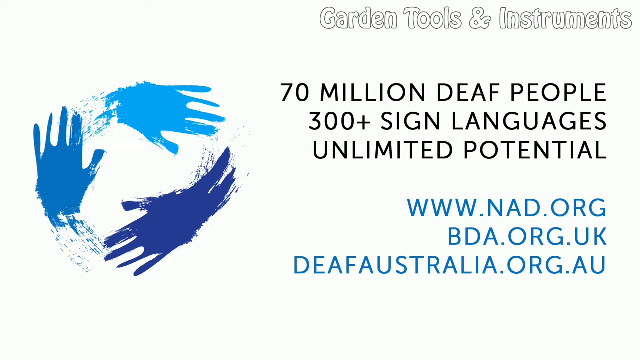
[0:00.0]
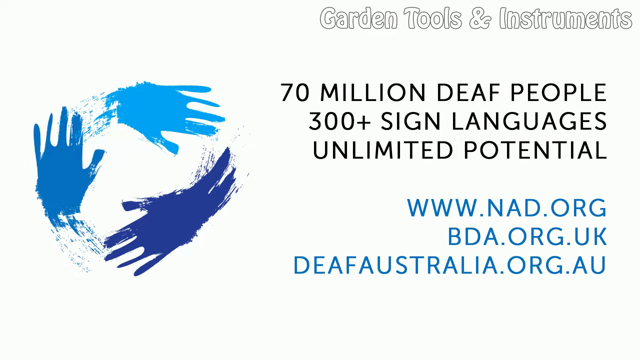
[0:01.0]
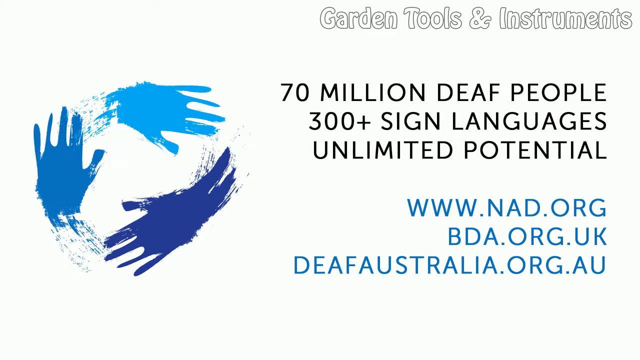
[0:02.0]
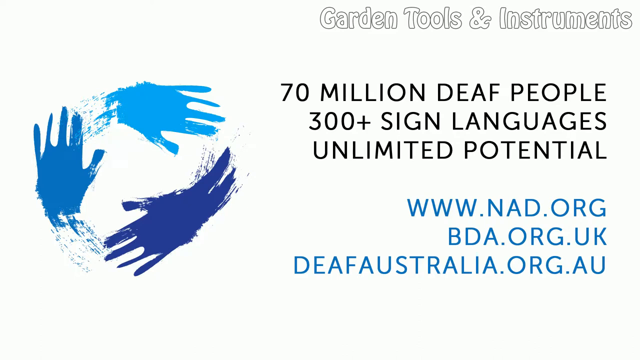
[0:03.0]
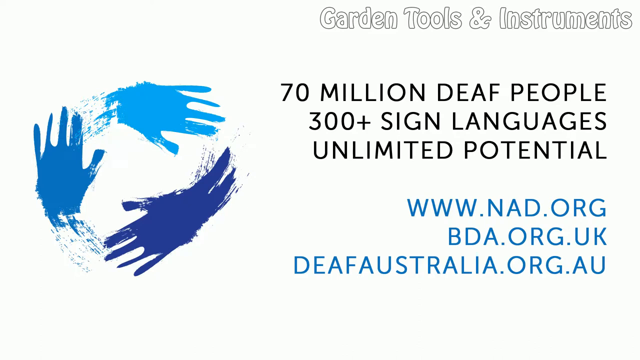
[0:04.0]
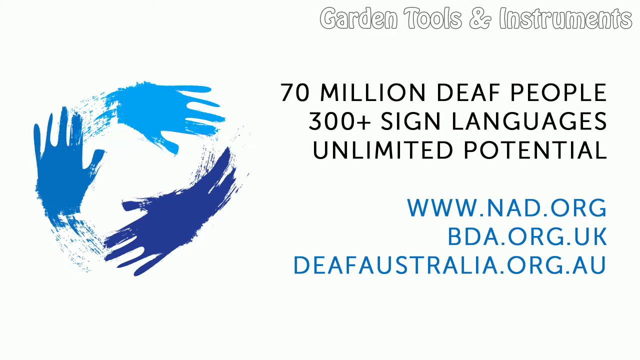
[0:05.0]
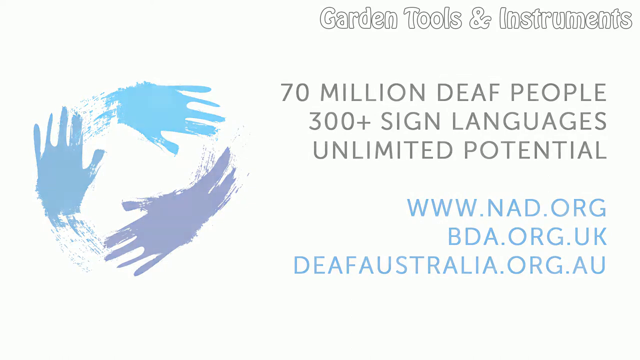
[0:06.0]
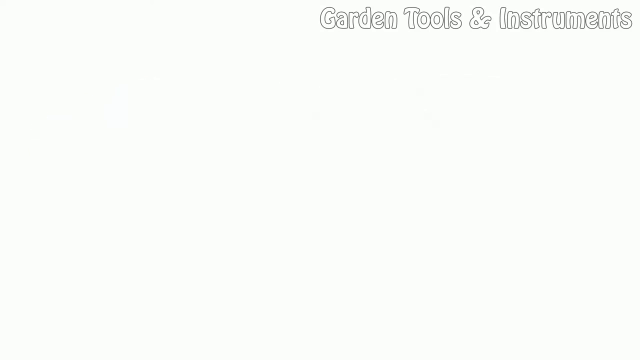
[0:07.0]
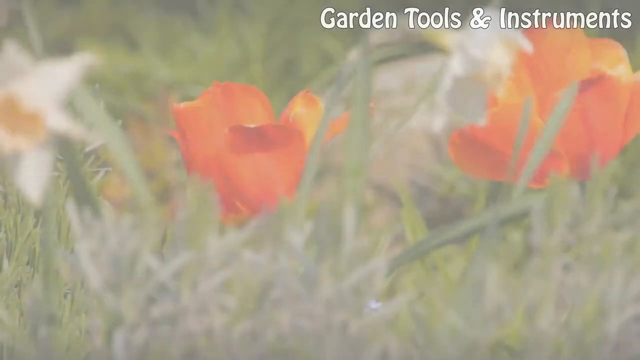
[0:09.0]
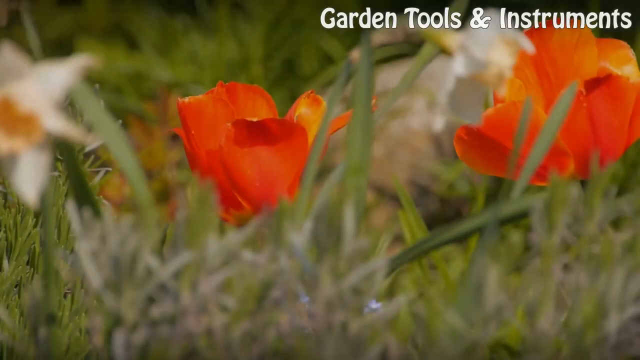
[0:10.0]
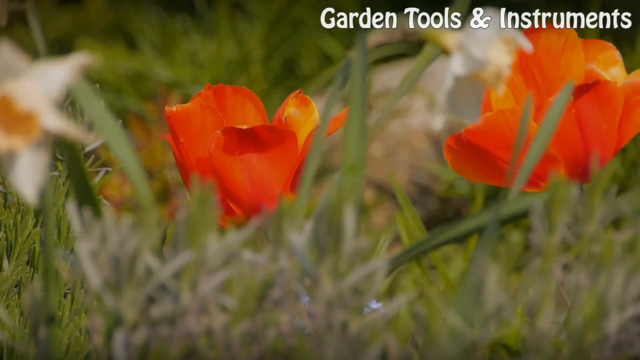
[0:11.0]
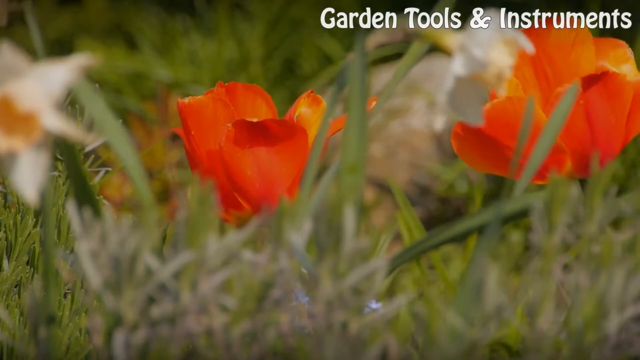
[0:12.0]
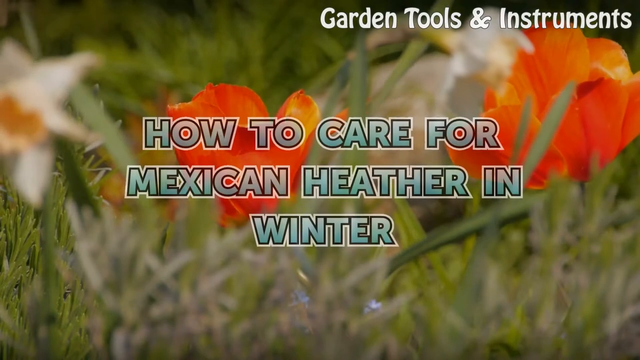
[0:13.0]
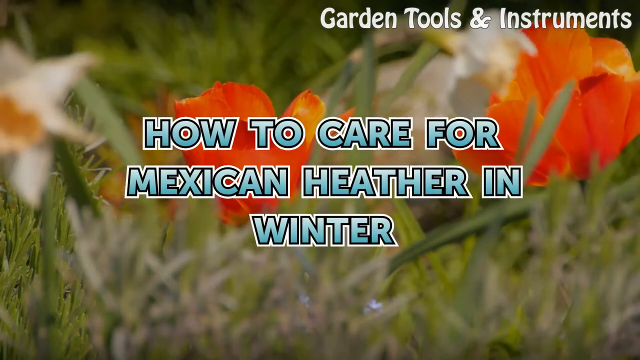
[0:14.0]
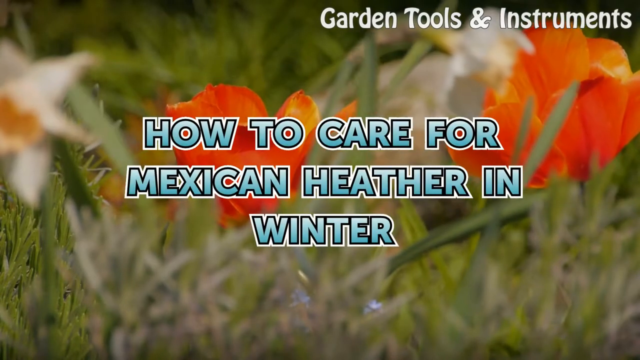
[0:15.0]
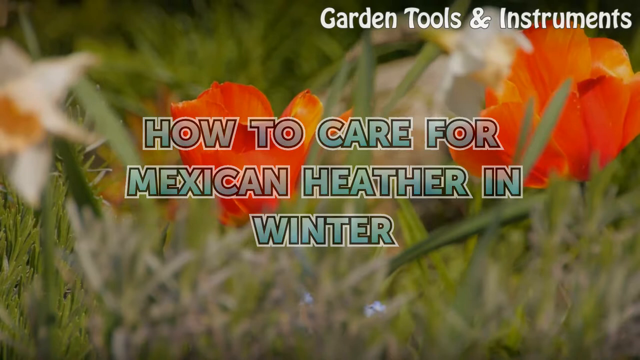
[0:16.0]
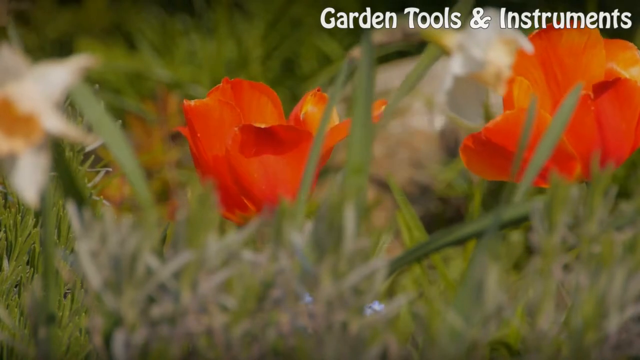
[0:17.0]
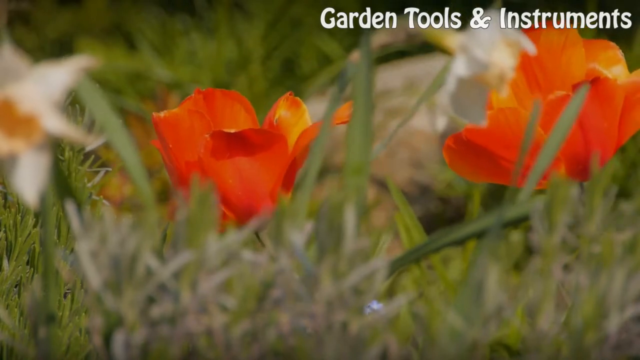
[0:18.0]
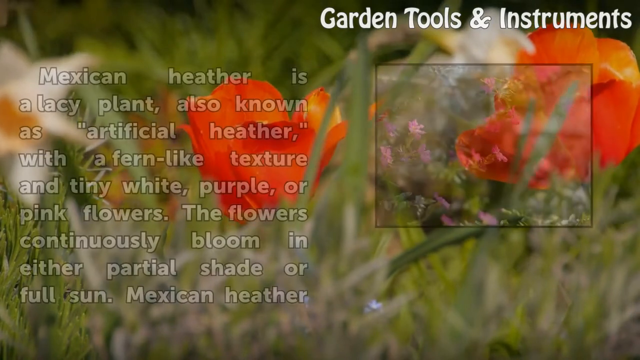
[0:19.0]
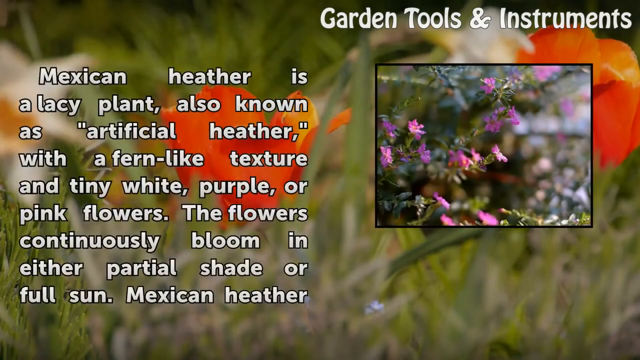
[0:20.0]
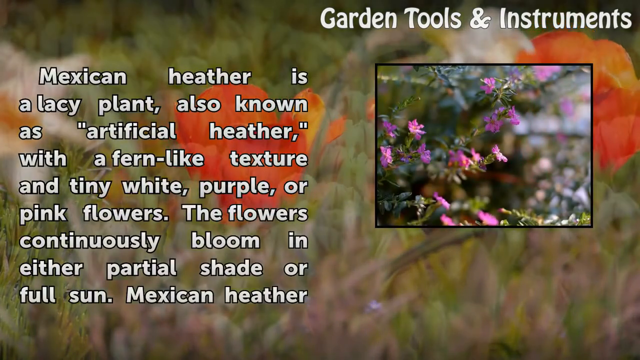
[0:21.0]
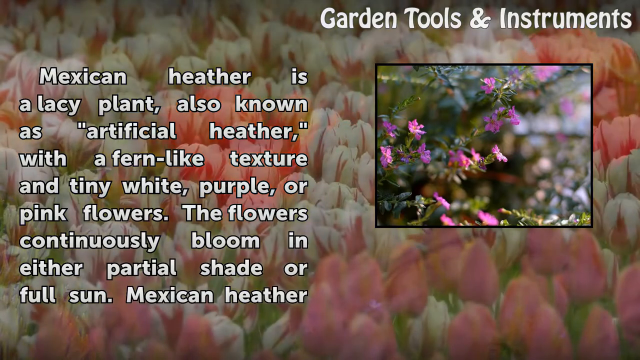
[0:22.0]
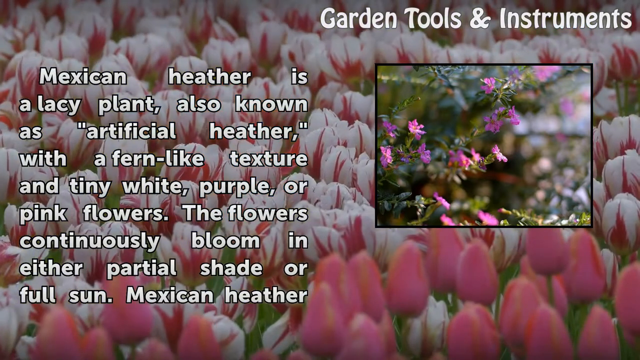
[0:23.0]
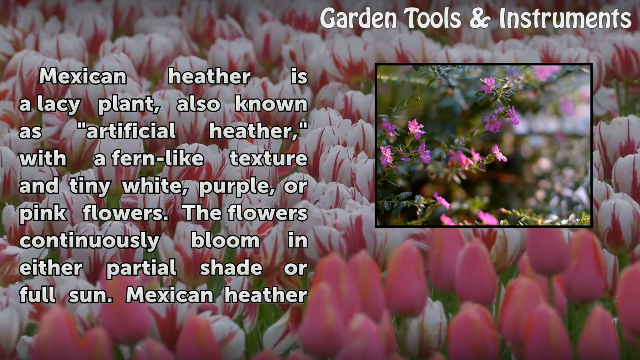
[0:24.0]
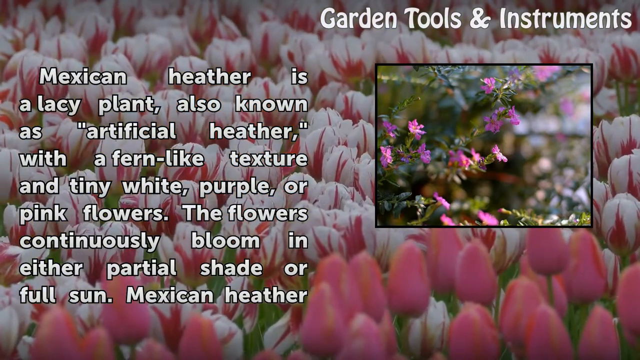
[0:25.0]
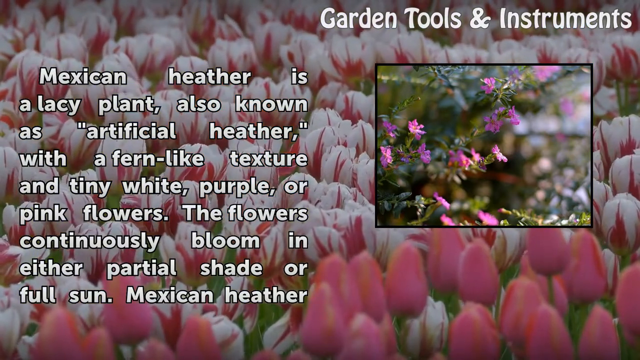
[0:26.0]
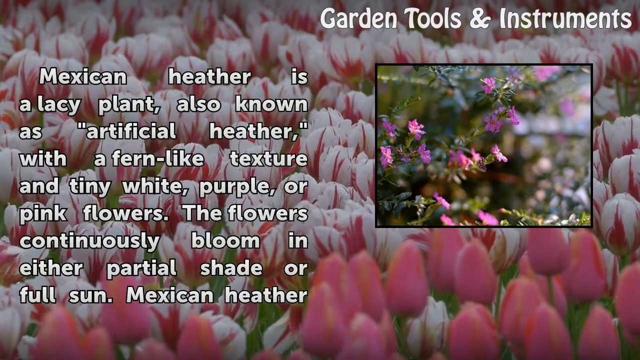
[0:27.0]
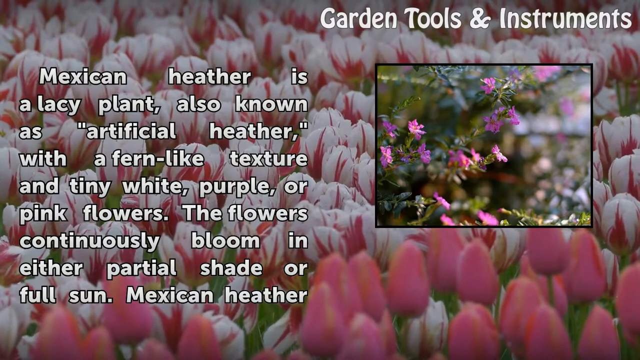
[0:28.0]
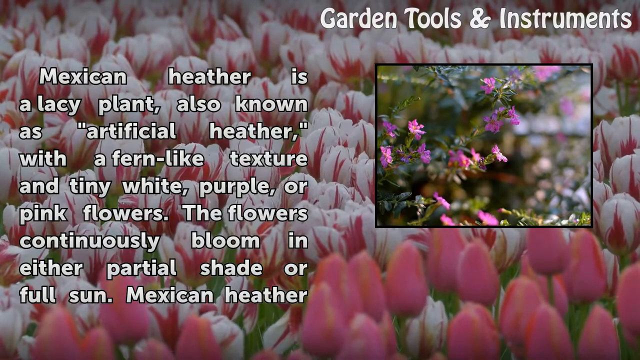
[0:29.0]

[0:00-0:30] Three hands are arranged in a circular fashion, presumably representing the world. To the right are the words "70 million deaf people", "300 plus sign languages" and "unlimited potential", and underneath them are "www.nad.org", "bda.org.uk" and "delia.org.au". White lettering in the top right corner reads "garden tools and instruments". A close-up of some flowers follows, with text superimposed over it in a light blue font with a black and white border: "how to care for Mexican heather in winter". The view then changes to a zoomed section of some flowers superimposed over the flowers still in the background, and to the left is white text reading "Mexican heather is a lacy plant also known as artificial heather with a fern-like texture and tiny white purple or pink flowers. The flowers continuously bloom in either partial shade or full sun". Another scene of these flowers then appears in the background.